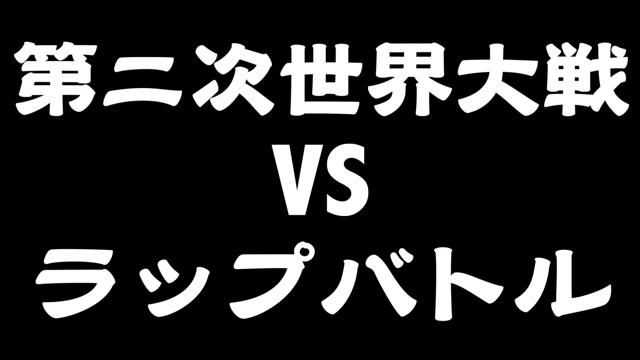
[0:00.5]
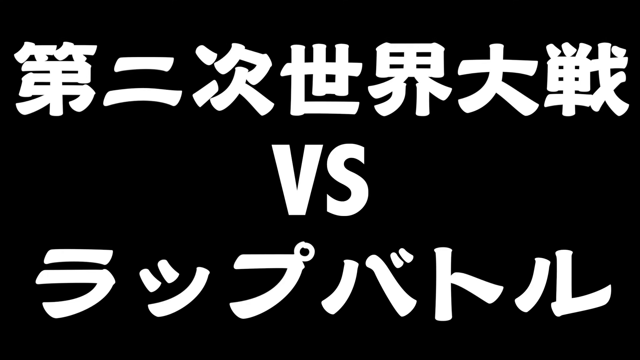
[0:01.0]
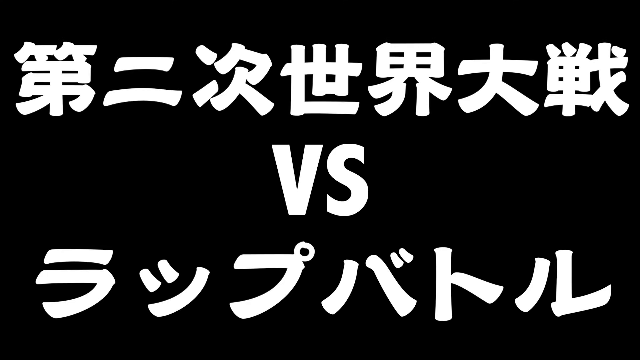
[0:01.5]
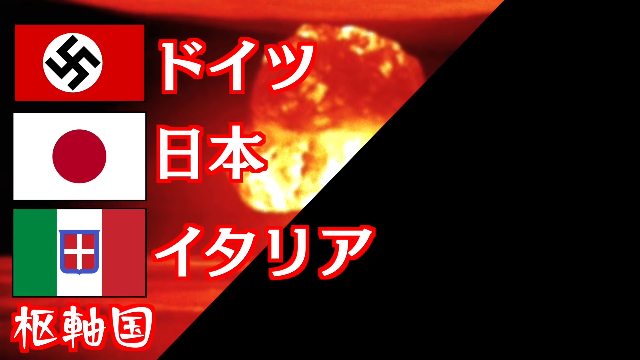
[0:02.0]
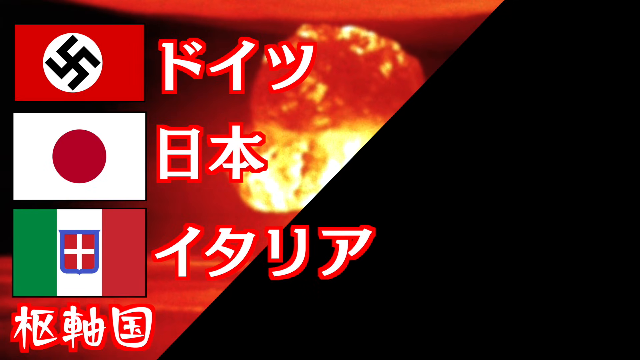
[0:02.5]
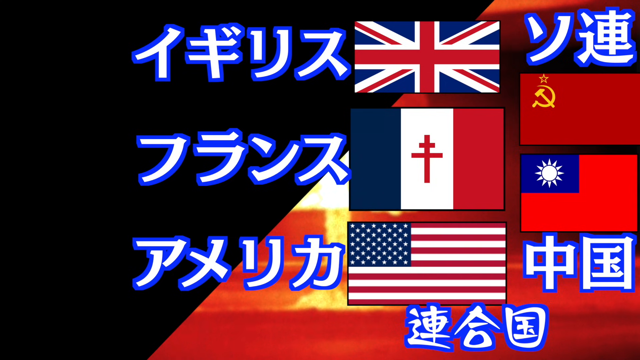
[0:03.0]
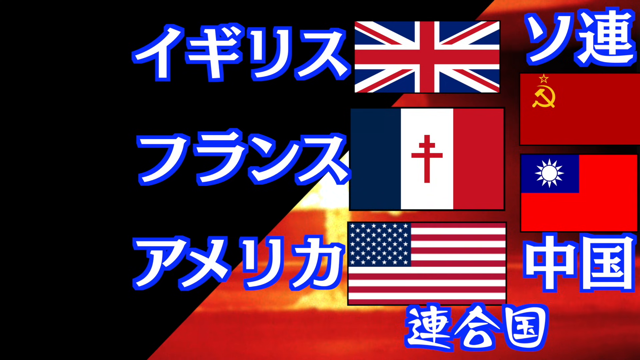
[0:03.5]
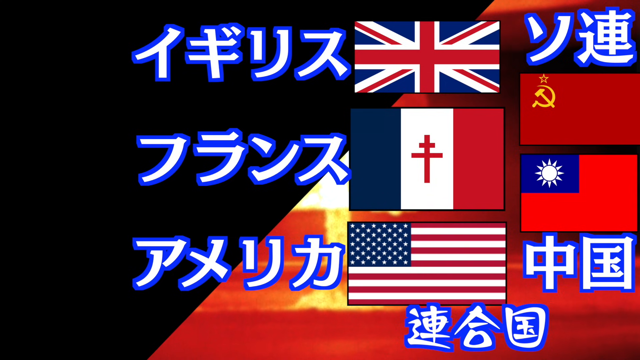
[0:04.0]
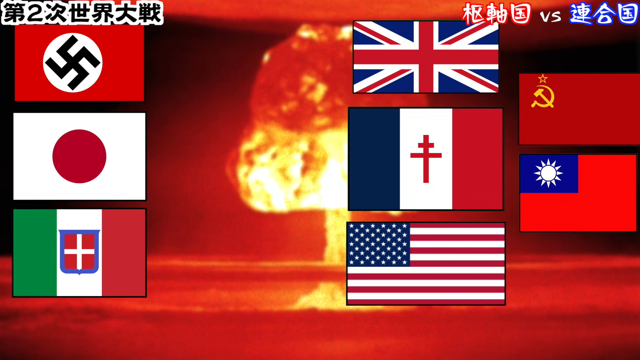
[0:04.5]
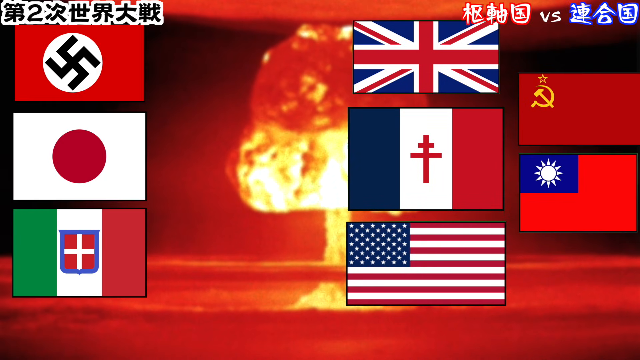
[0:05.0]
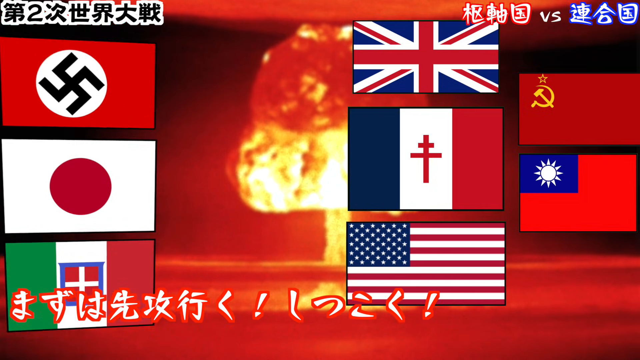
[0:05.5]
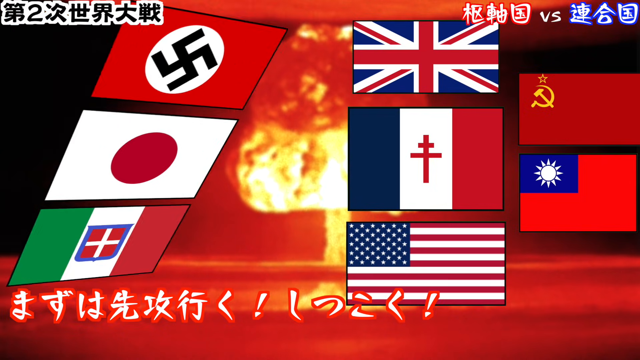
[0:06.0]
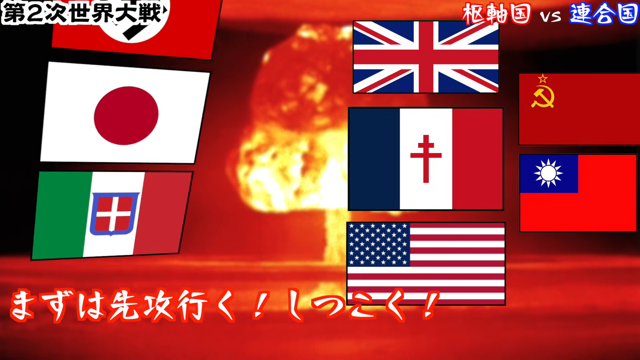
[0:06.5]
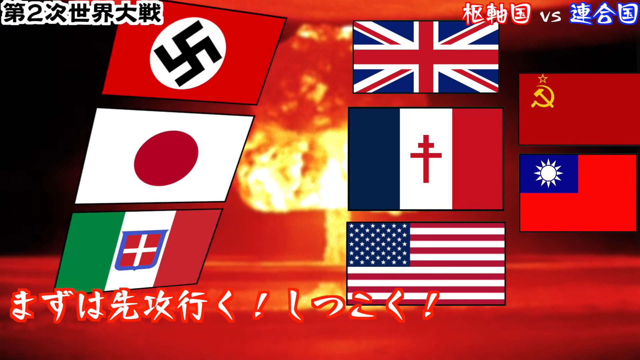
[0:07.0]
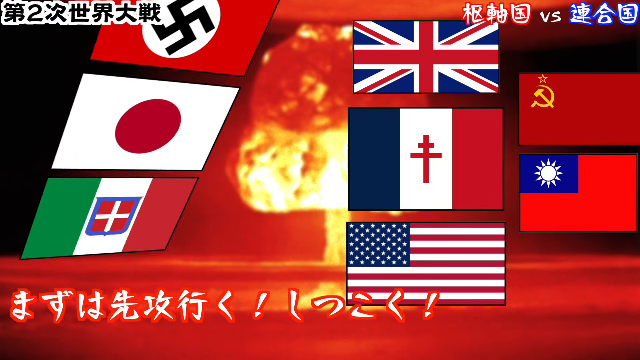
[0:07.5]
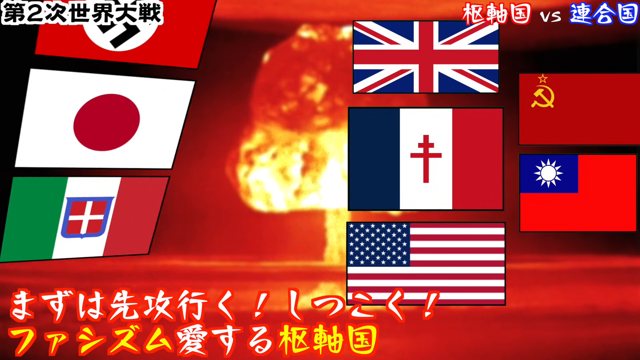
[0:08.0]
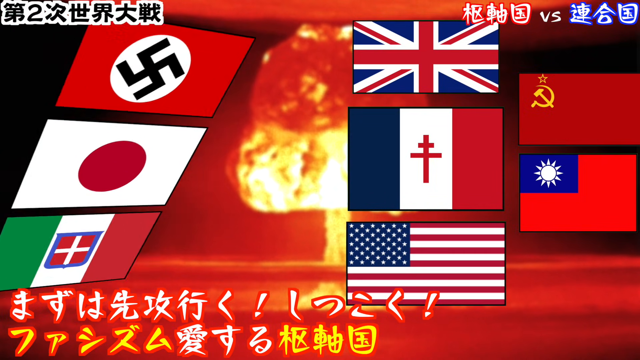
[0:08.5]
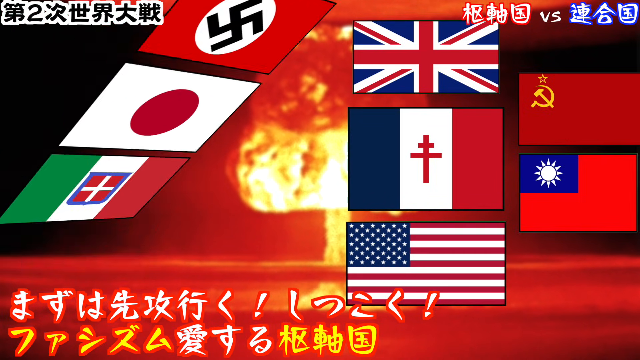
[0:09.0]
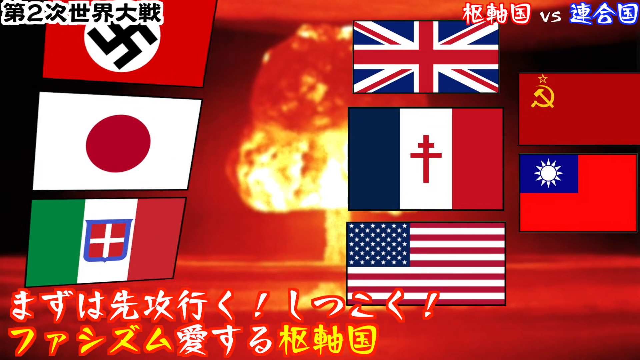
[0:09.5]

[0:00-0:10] Flags of different countries appear, such as those of China, the United States of America and the United Kingdom, among many others. There is also some descriptive text, which seems to be written in Chinese characters.